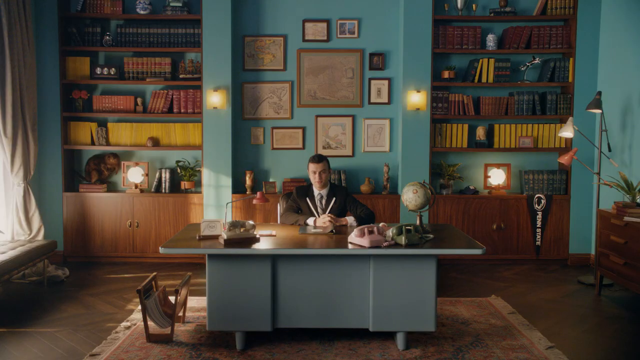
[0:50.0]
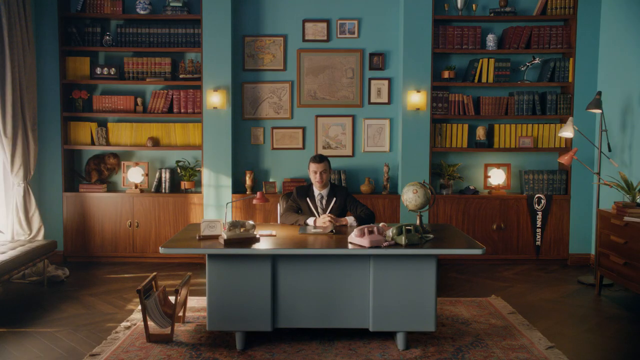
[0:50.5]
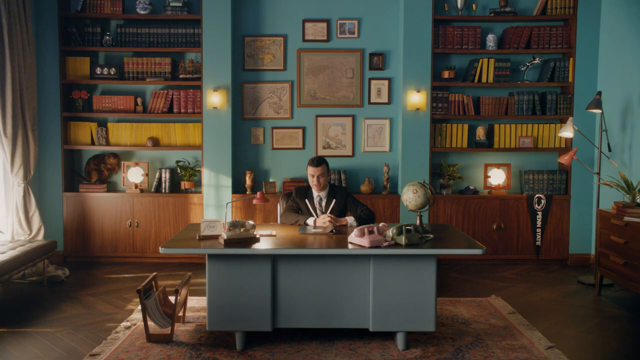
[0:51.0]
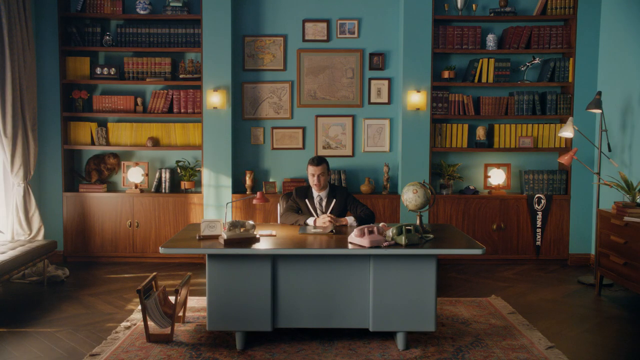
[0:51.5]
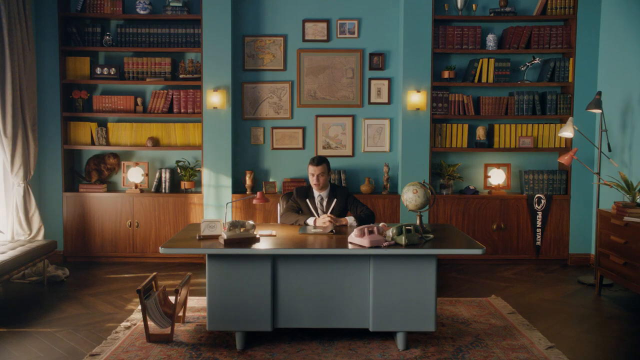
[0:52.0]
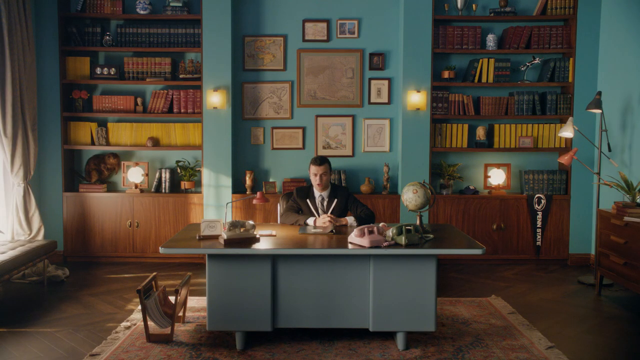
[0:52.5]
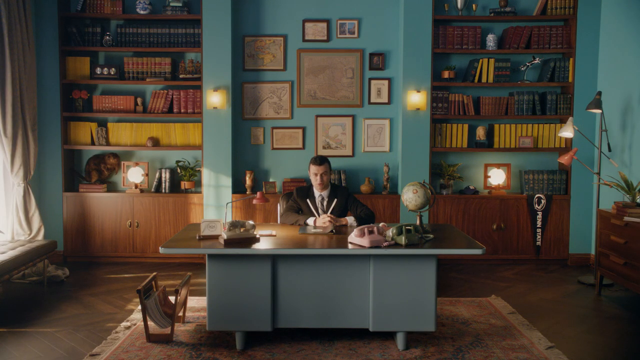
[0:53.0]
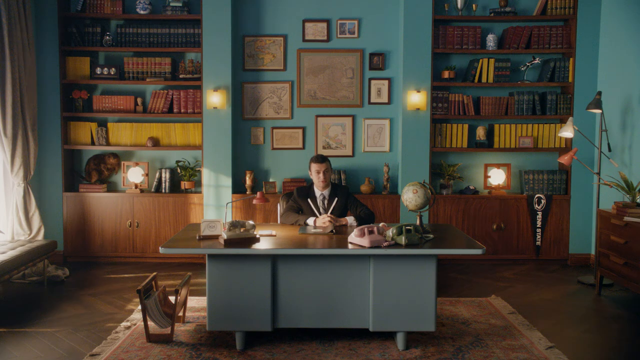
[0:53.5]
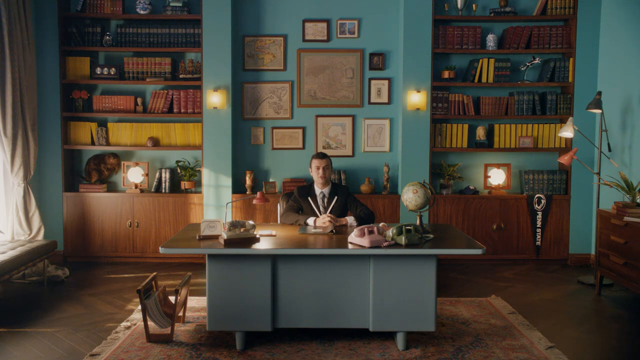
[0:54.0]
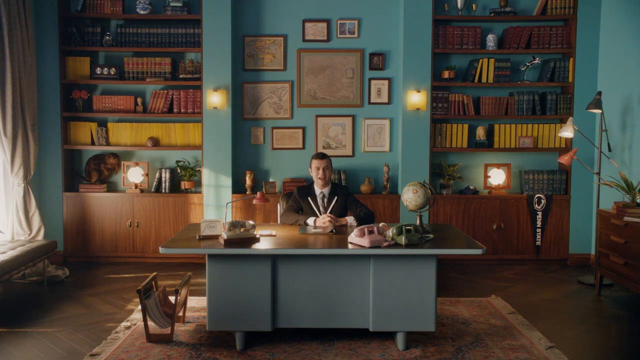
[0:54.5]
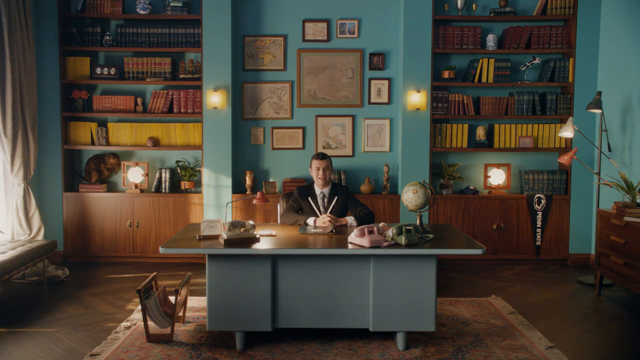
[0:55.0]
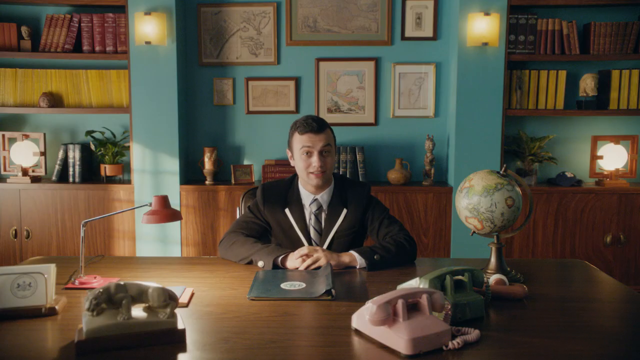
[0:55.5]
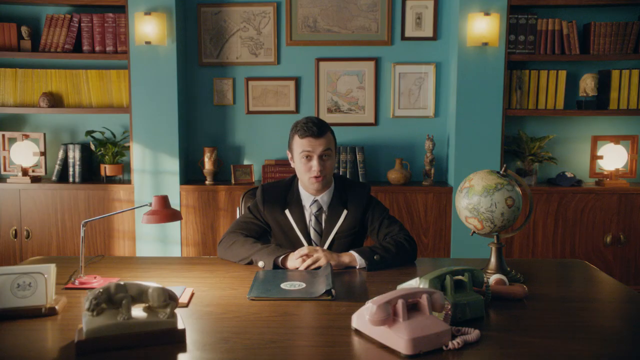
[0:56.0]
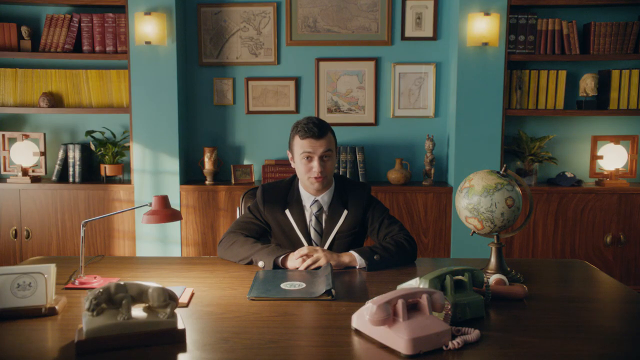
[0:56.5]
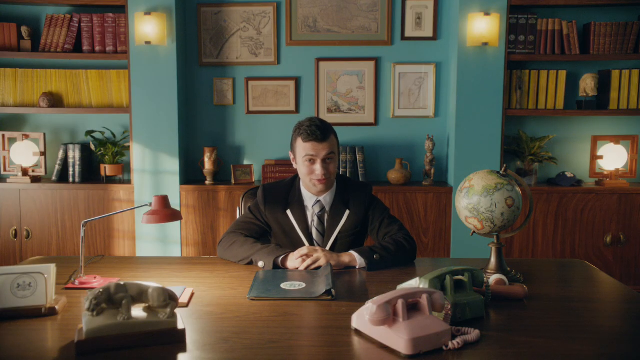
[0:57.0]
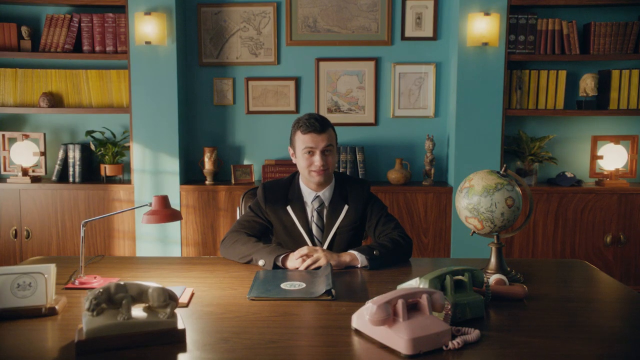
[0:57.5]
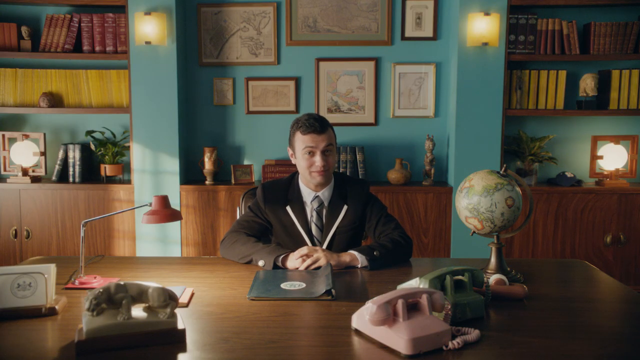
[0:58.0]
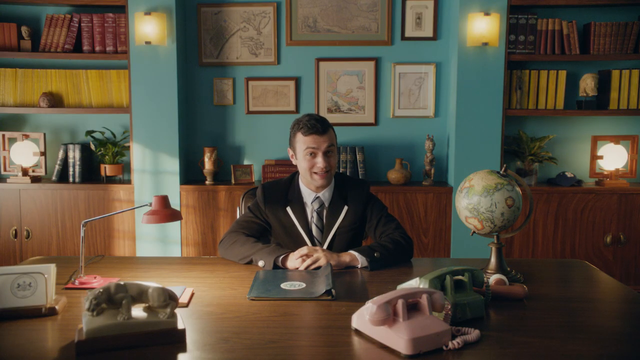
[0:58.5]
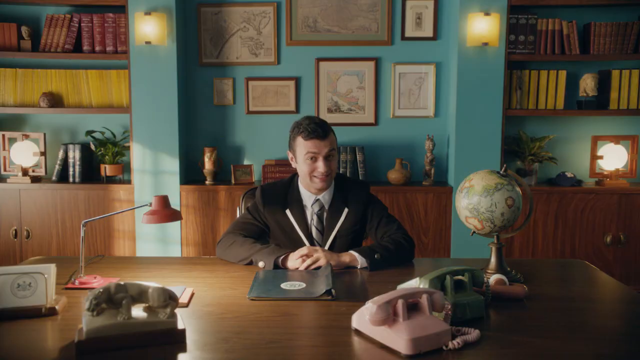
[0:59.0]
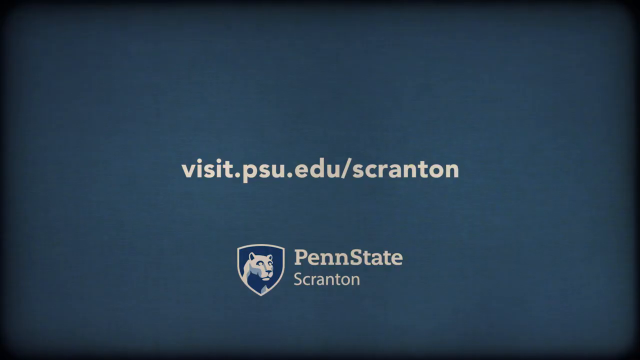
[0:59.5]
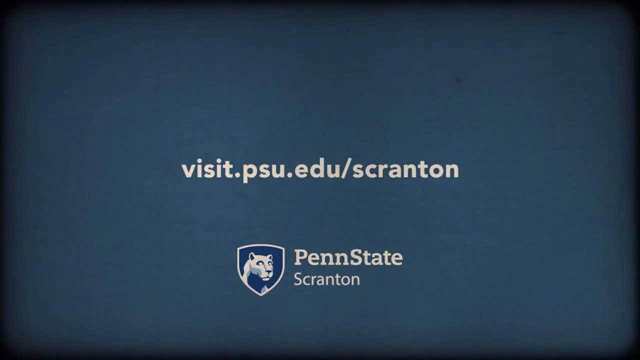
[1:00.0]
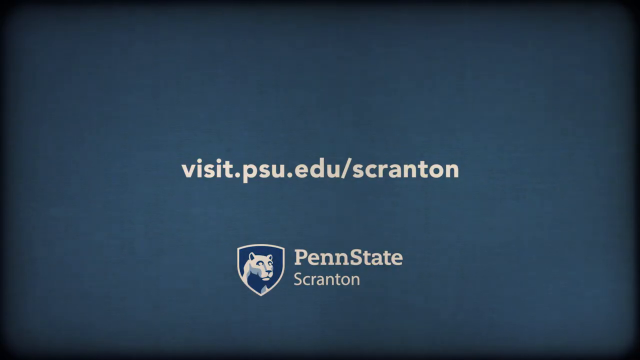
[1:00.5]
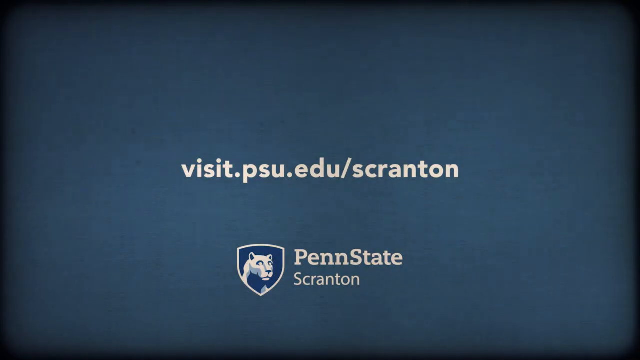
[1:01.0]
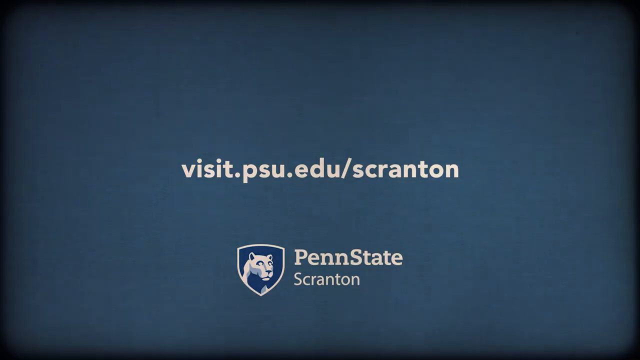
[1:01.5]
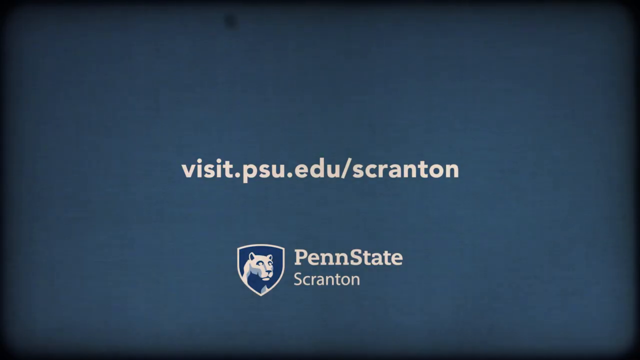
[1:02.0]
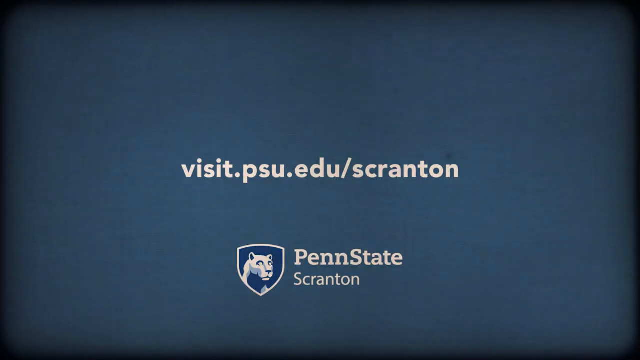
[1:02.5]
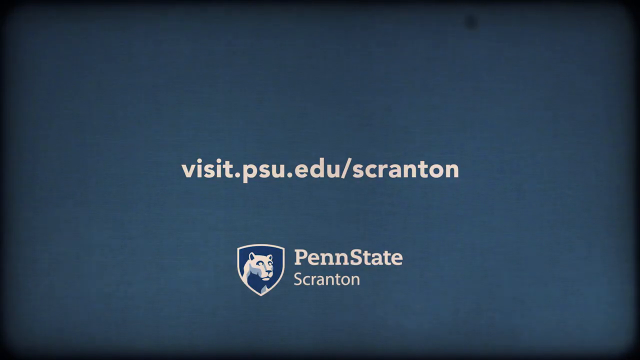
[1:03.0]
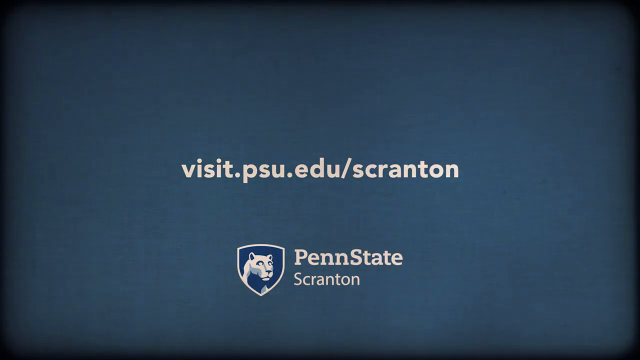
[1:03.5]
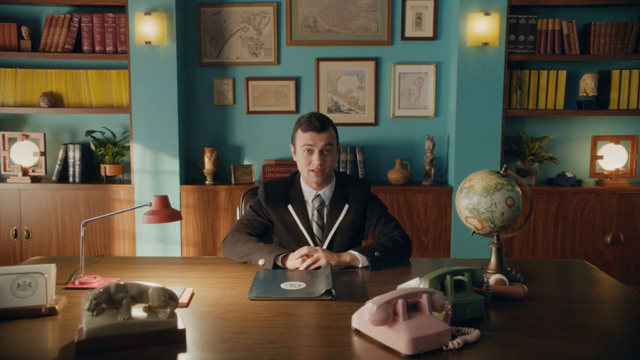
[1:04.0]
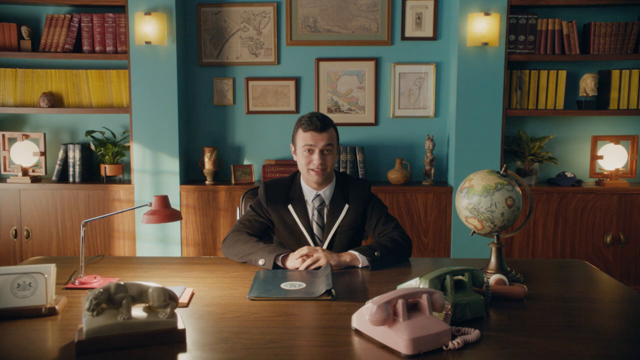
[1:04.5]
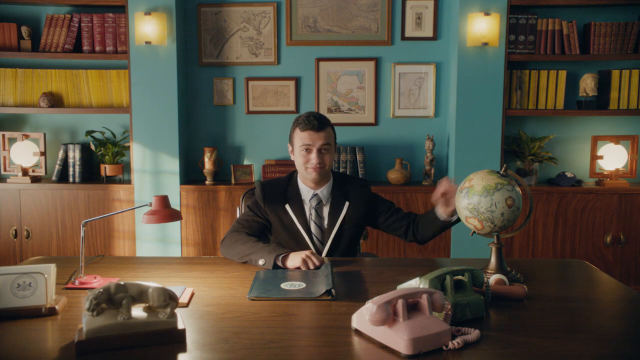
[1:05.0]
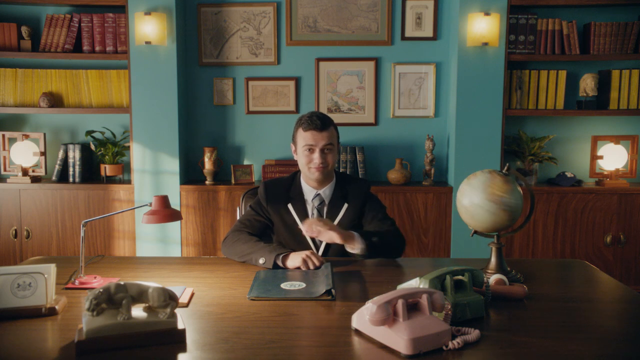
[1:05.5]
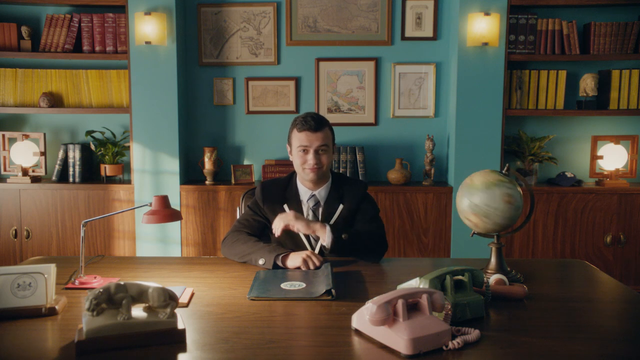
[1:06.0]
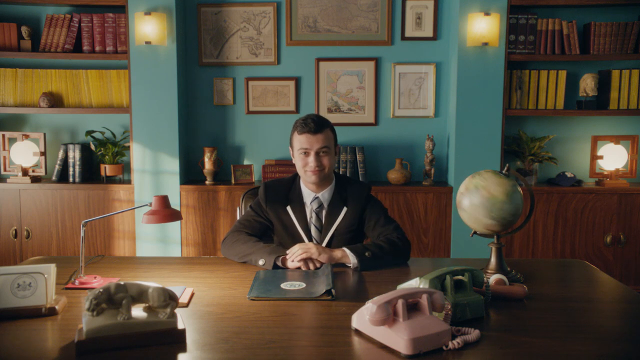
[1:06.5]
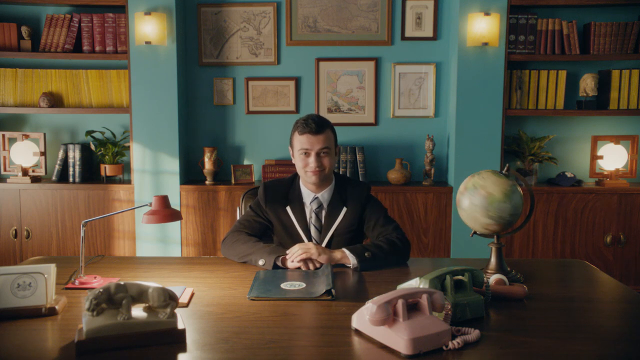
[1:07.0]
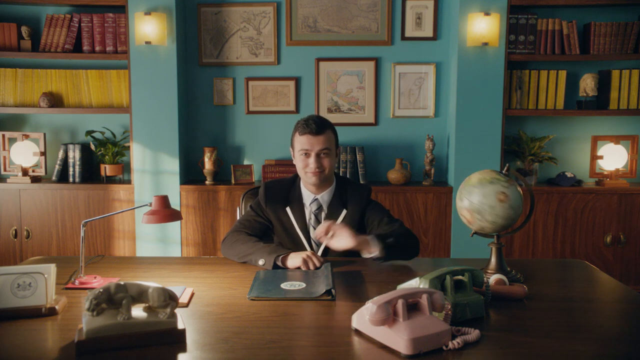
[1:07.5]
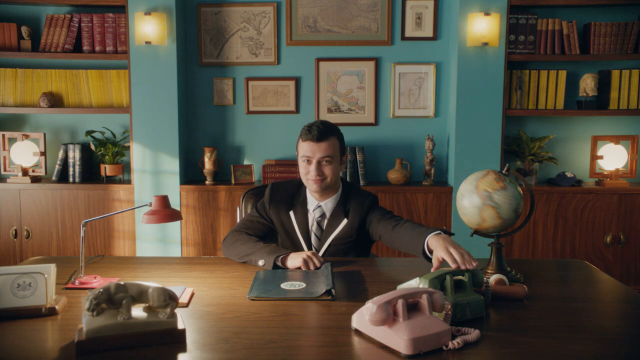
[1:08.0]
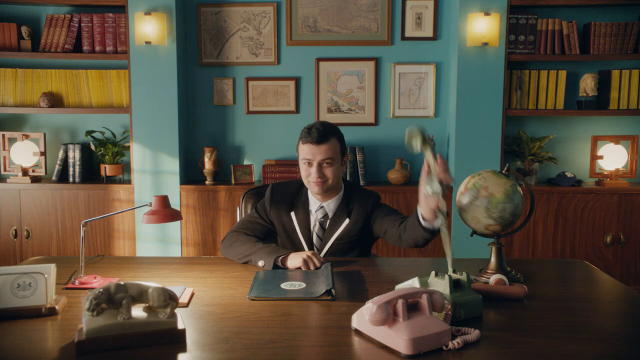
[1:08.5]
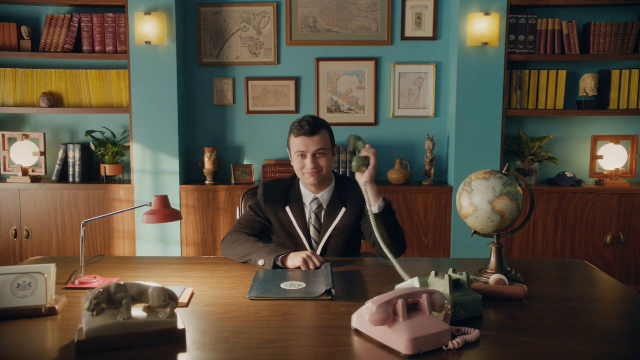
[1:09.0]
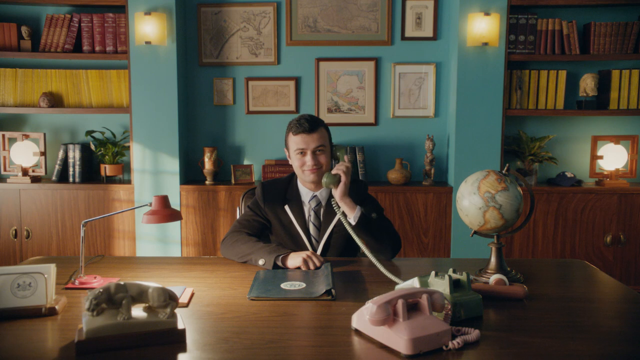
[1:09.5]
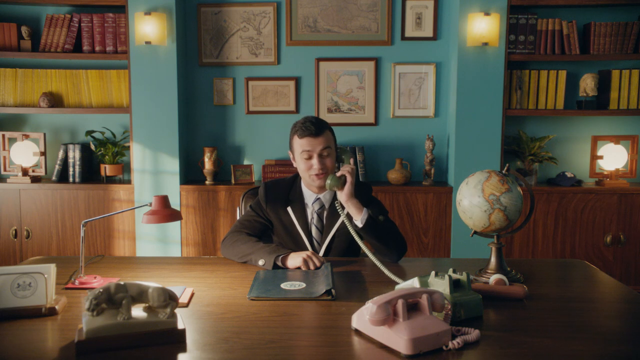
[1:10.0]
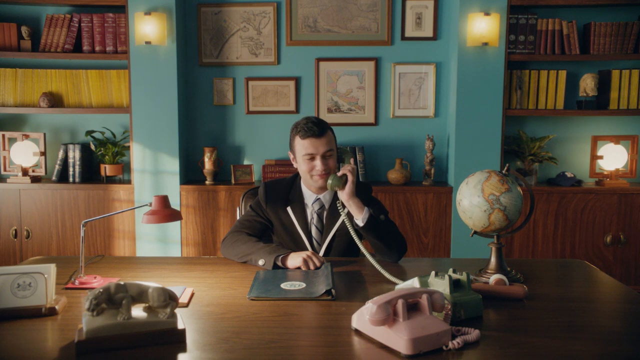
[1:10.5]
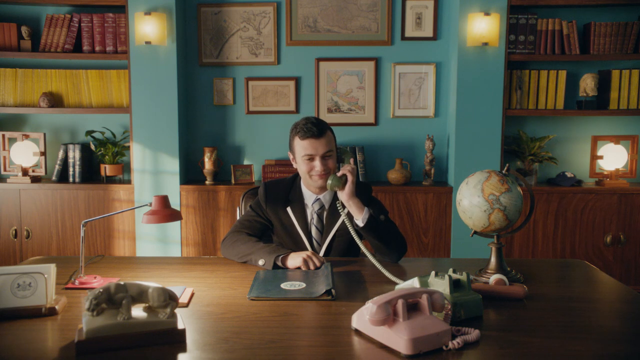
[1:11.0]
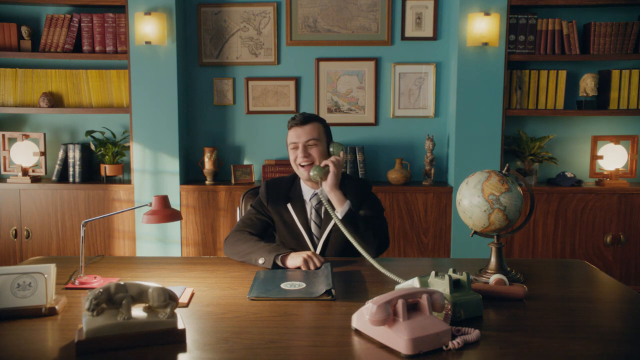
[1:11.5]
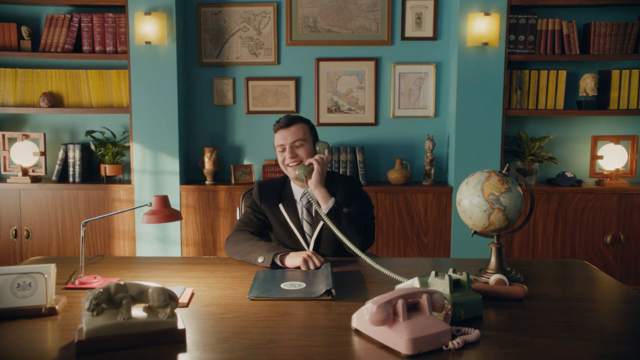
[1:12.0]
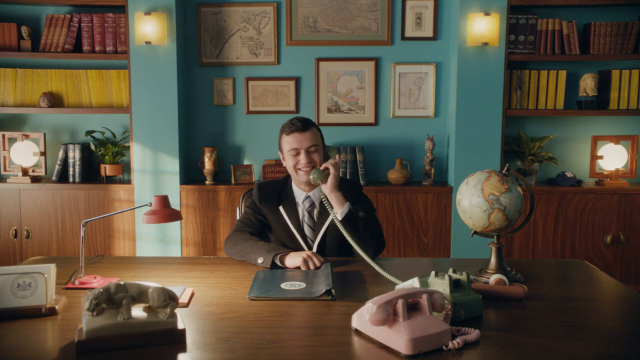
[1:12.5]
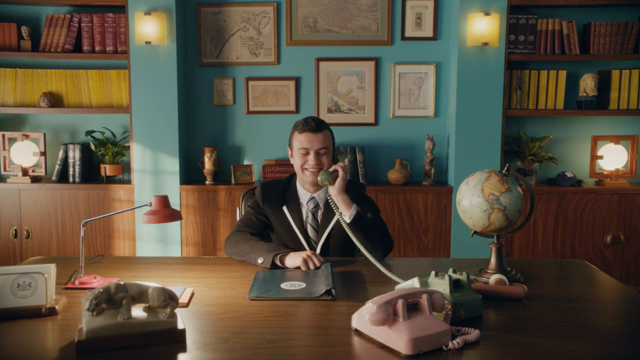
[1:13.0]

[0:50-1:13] A man with short brown hair and white skin sits at a desk, wearing a black suit jacket, a white dress shirt and a gray tie with black stripes. The camera is somewhat zoomed out, showing a blue-green wall in the background with lots of pictures on it, several shelves with books on them to the left and right of the wall, and below that cabinets with books on them, a plant on the left side and a statue. On the desk are a globe on the right side, a green telephone and a pink telephone. The man has his hands together on the desk and talks to the camera. White text then comes onto the screen on a blue background, reading "visit.psu.edu/Scranton", and below it is a Penn State logo with text next to it reading "Penn State Scranton".